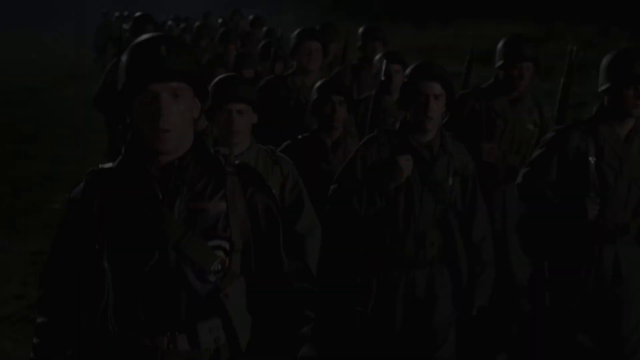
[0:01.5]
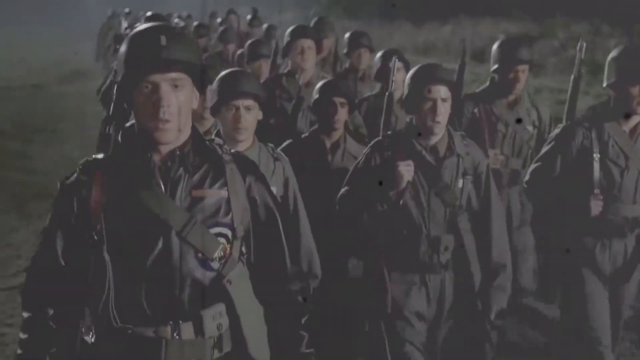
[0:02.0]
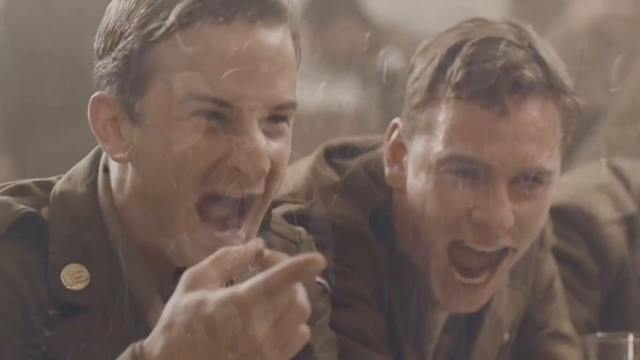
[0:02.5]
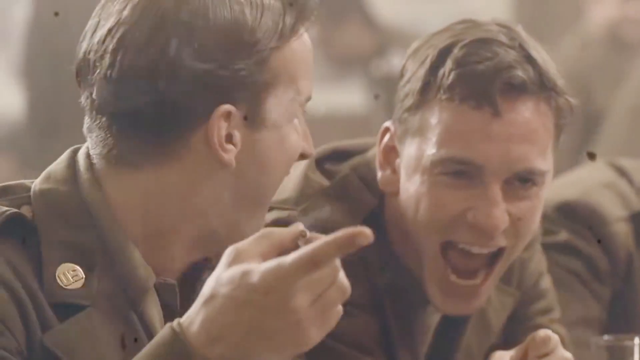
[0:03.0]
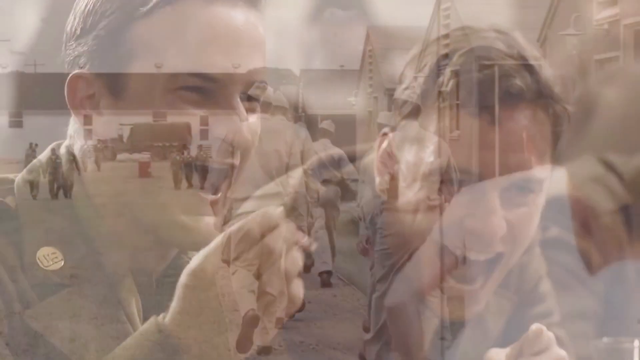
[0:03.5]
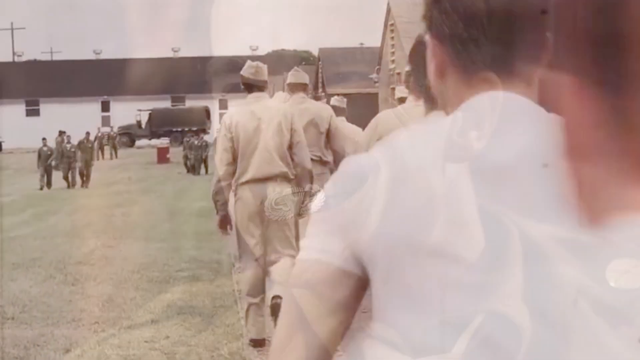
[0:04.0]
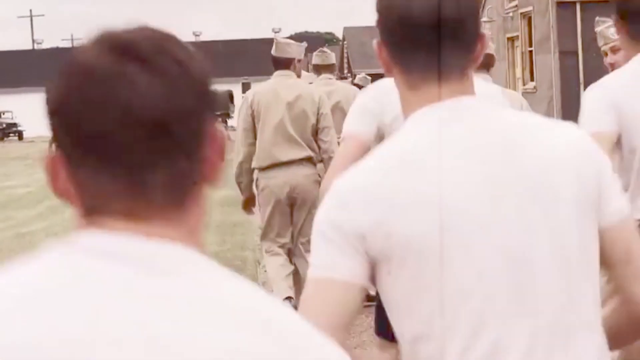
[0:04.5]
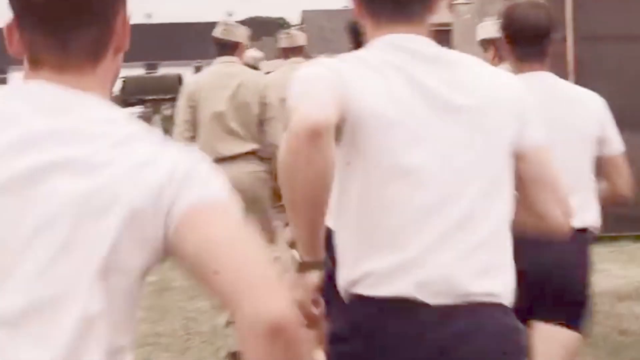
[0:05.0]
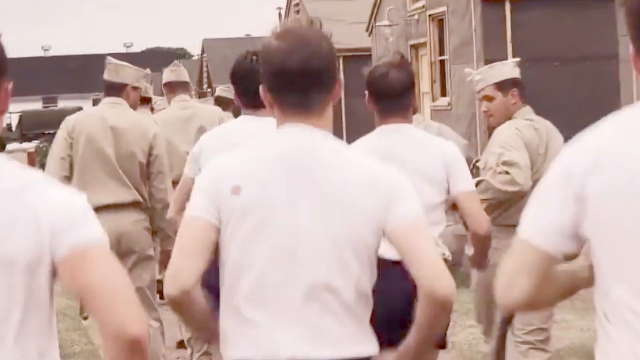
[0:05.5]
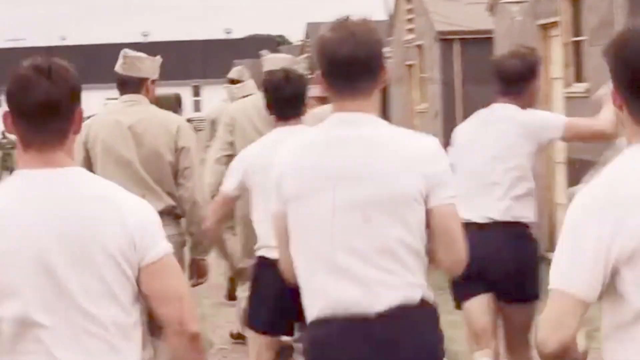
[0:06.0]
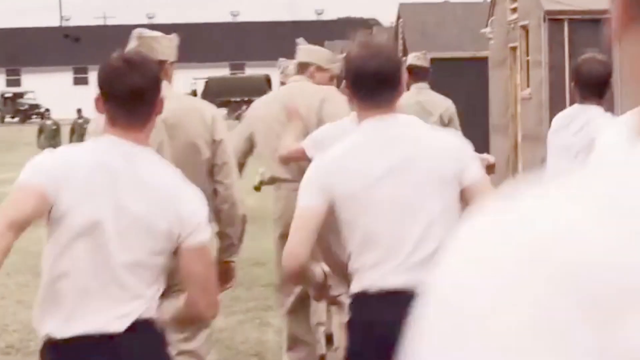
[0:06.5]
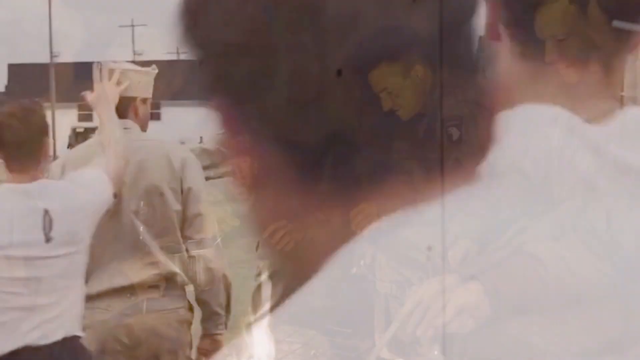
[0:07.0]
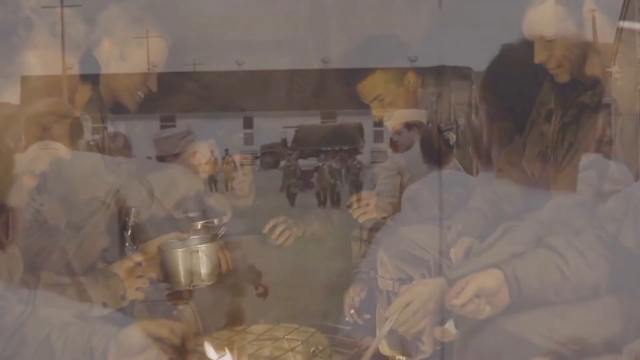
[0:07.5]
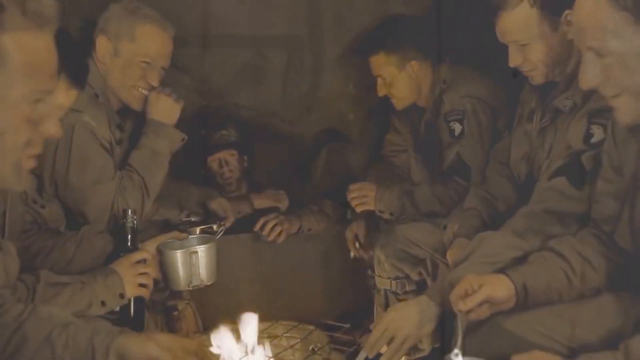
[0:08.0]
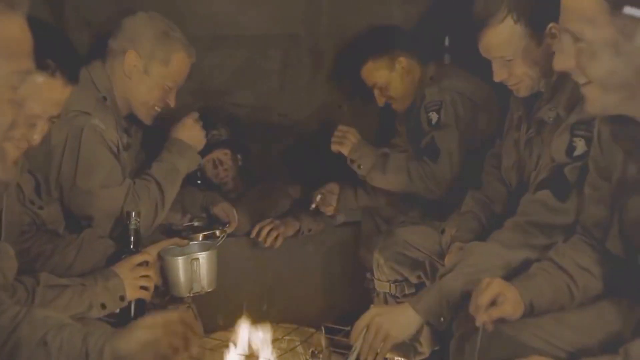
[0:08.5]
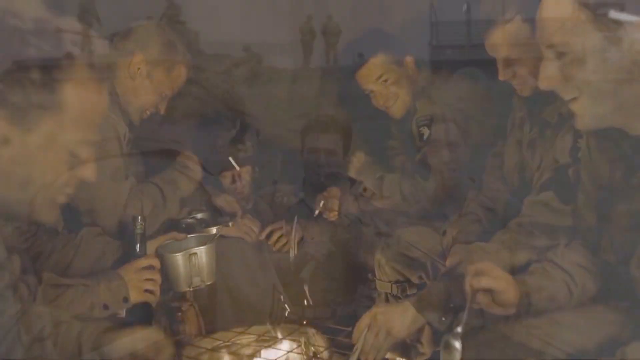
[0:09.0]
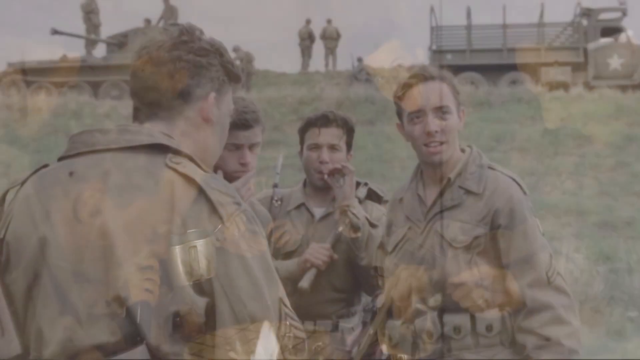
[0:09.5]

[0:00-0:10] Soldiers walk toward the camera, and the shot fades into two soldiers laughing. Soldiers in white shirts run as if in a drill, with experienced soldiers in uniform ahead of them. Soldiers laugh in a tent, possibly during wartime, and some soldiers are smoking. The footage goes from almost black and white to color, and there is a gray sky.